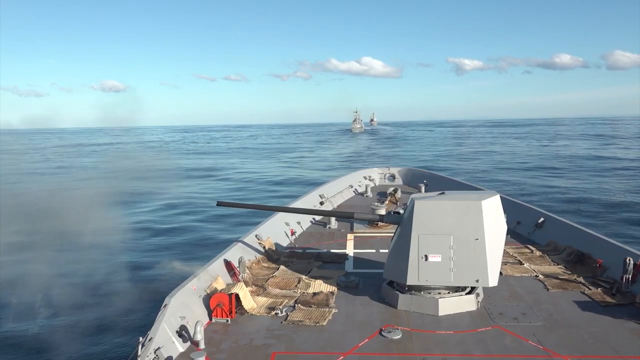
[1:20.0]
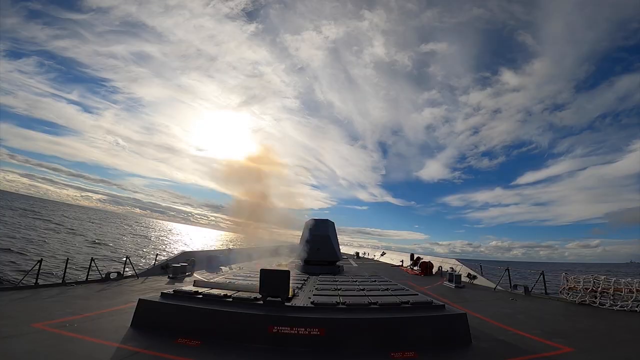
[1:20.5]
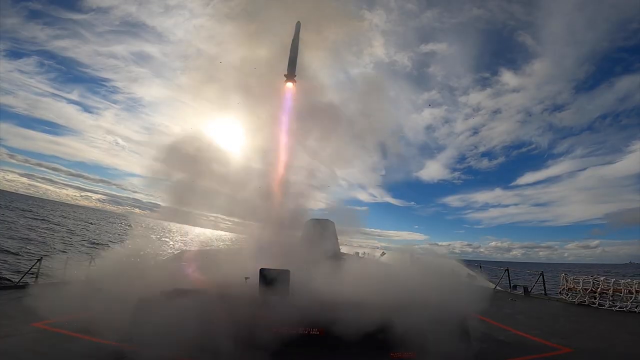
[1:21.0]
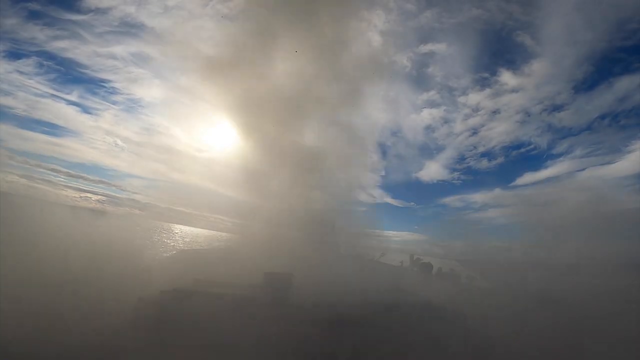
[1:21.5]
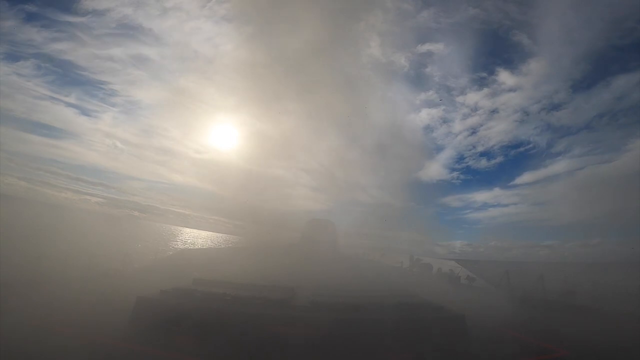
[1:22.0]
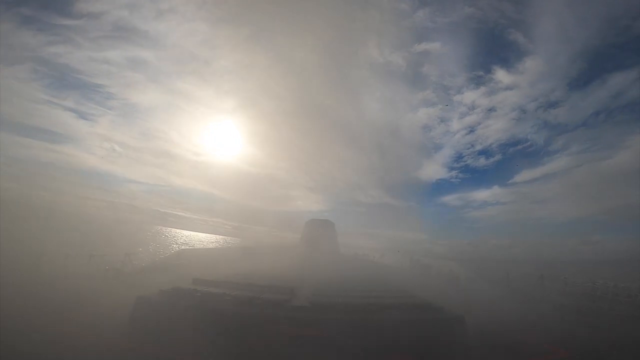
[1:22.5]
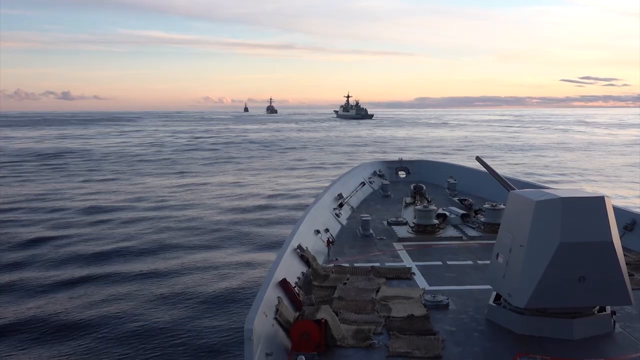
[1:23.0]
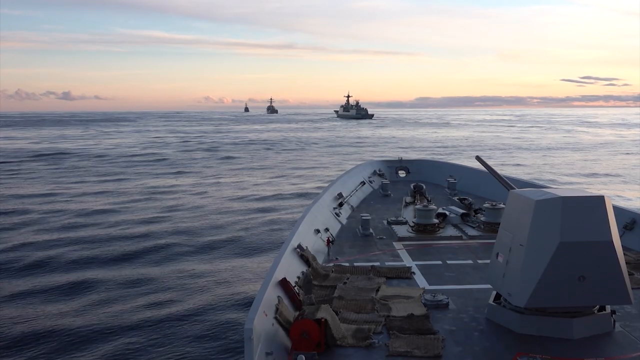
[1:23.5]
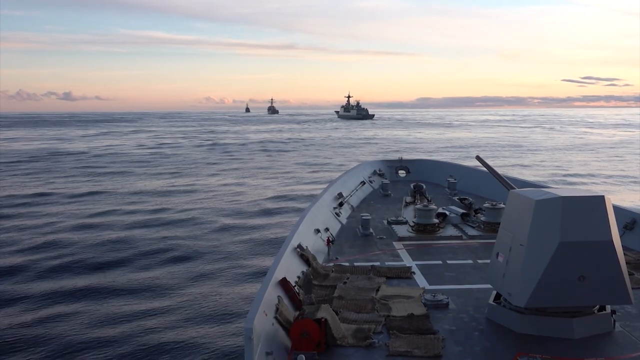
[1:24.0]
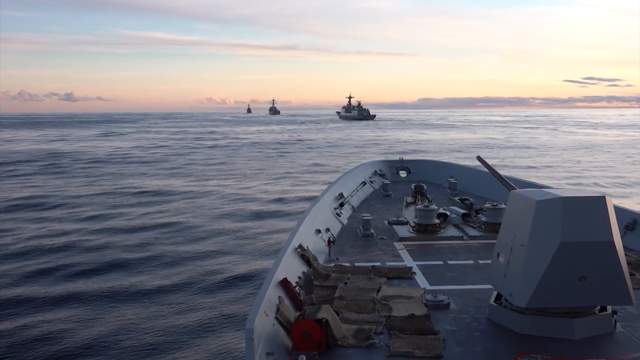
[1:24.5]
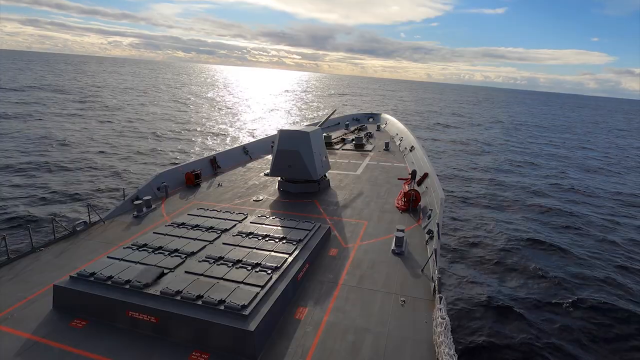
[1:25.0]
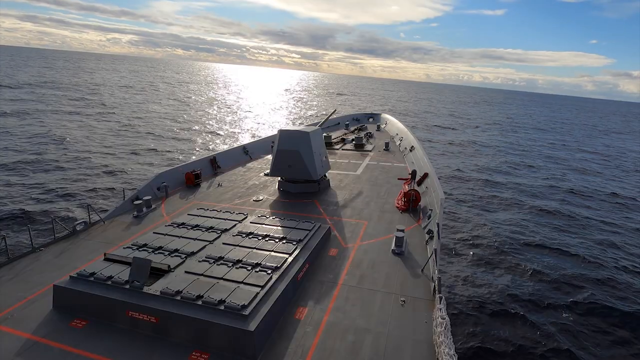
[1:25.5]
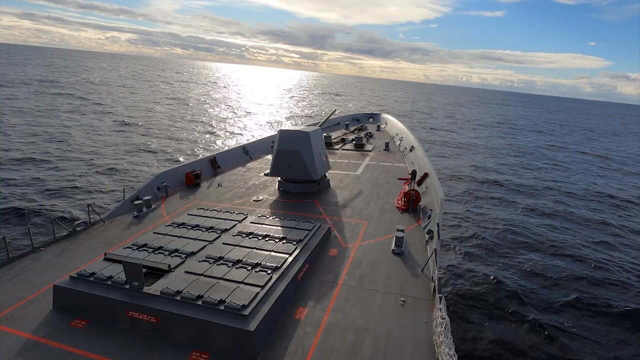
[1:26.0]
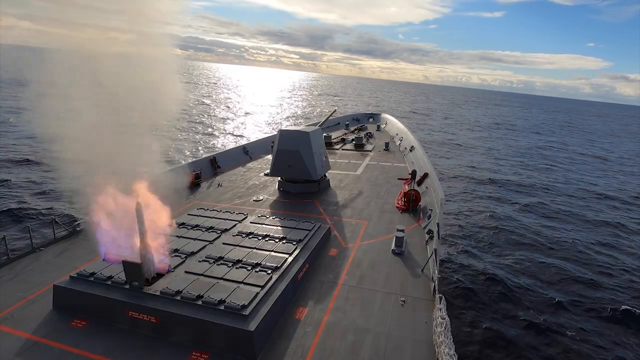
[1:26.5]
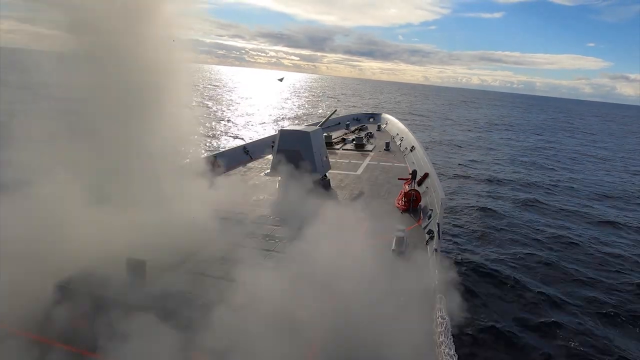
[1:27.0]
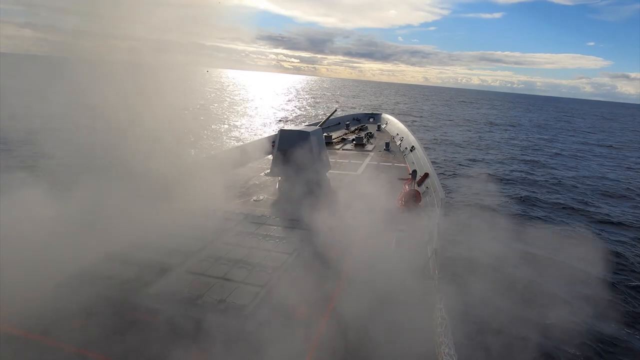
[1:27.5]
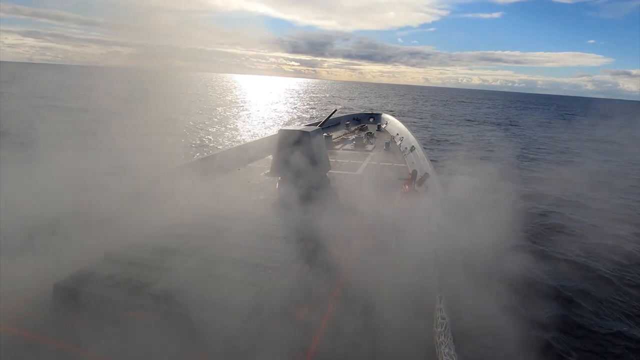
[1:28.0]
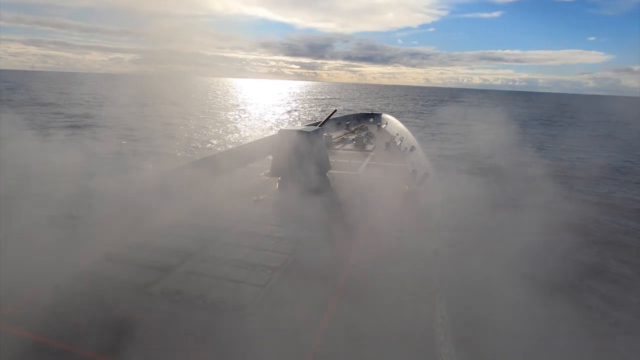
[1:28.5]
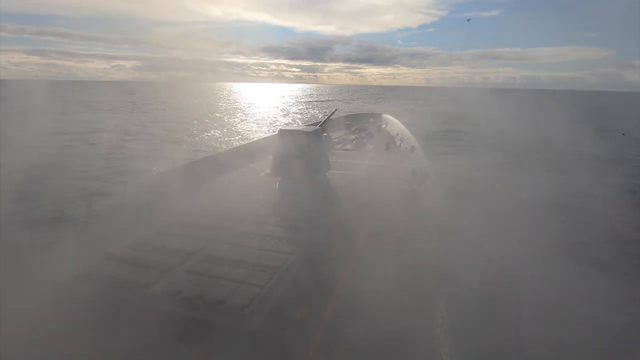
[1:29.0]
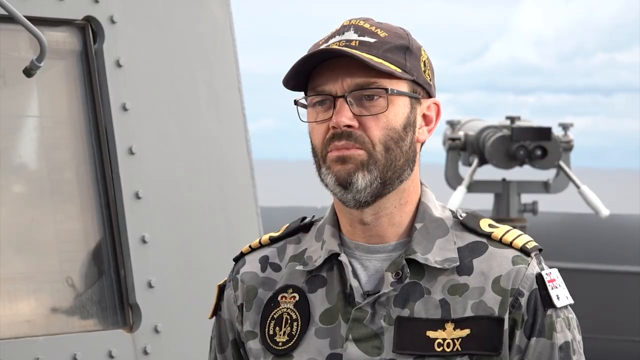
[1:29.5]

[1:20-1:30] The front, or bow, of a ship has a cannon on it that appears to have just fired, as there is smoke not far from it. Another scene shows the front or bow of a ship where a missile has been fired from the center of the ship upwards, with flame flying up and smoke filling the screen. Next, the front of a ship is shown with several other ships in the distance. A side view shows what looks to be the front of a ship with a cannon on it and several what look to be missile compartments; one of them opens and a missile flies into the air, the flame going down from it, as smoke fills the entire screen and goes onto the boat's deck. Very briefly, a man in a uniform with the name Cox on the front talks directly to the camera. It appears to be several small video clips of these ships, with missiles and cannons being fired.